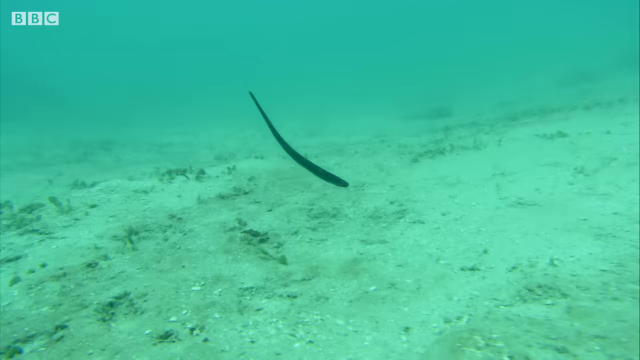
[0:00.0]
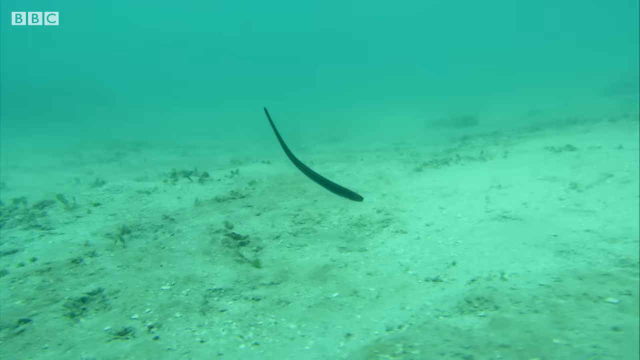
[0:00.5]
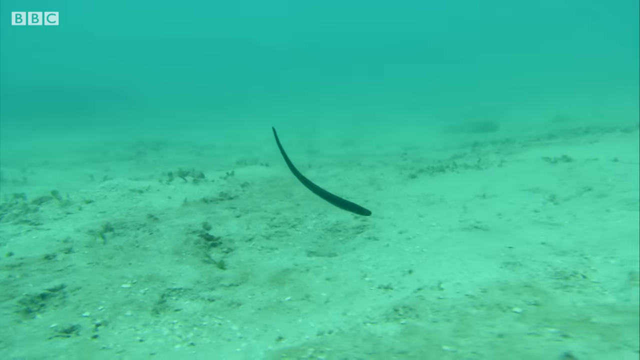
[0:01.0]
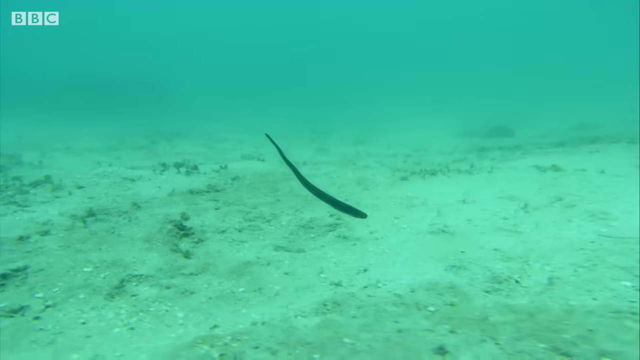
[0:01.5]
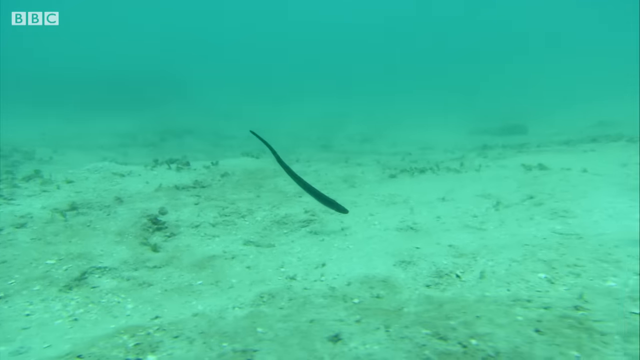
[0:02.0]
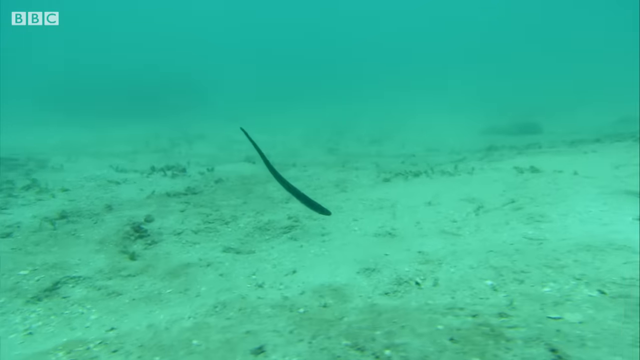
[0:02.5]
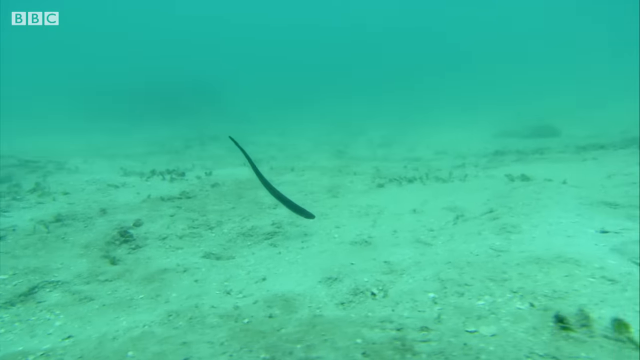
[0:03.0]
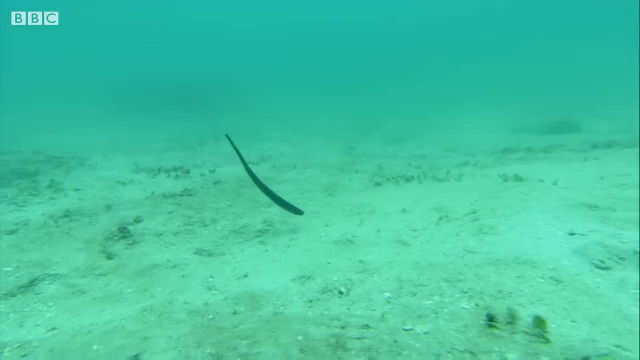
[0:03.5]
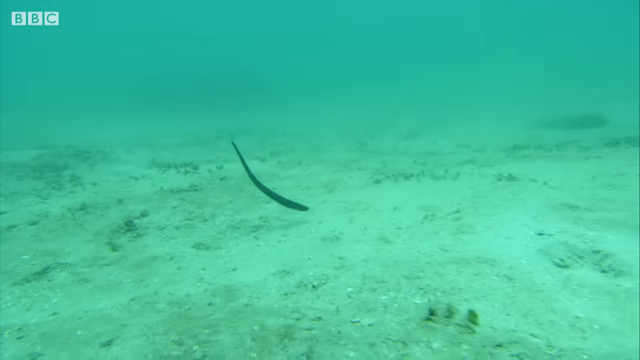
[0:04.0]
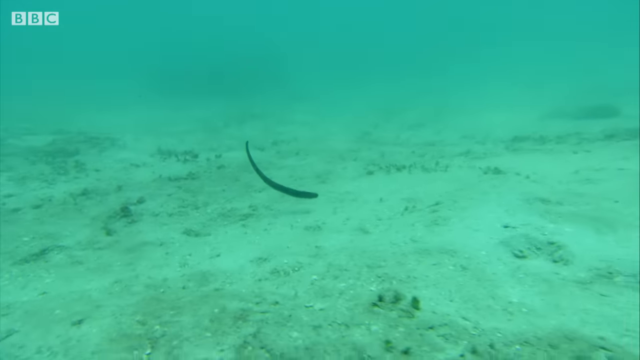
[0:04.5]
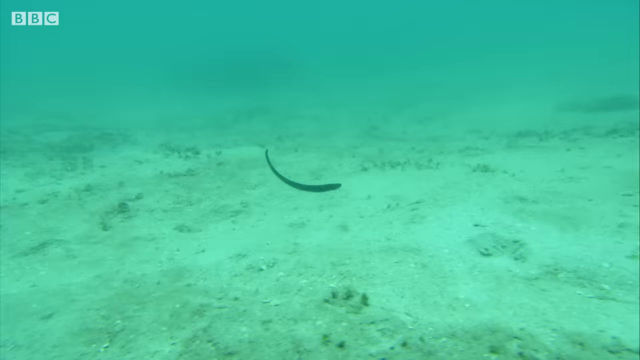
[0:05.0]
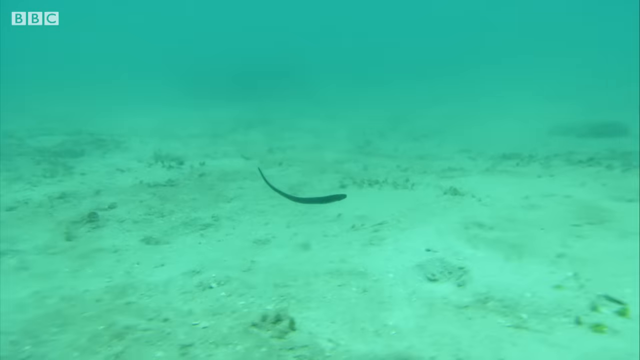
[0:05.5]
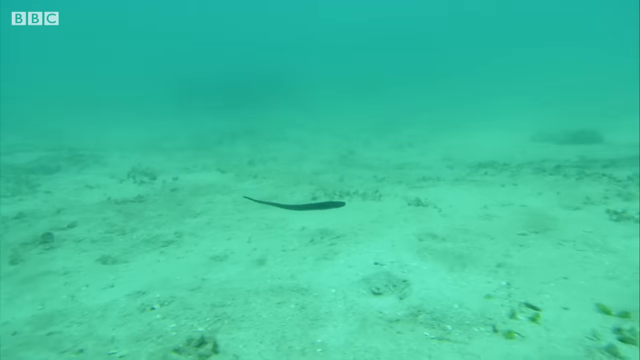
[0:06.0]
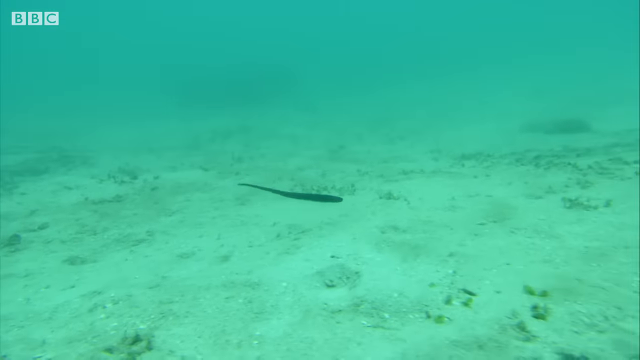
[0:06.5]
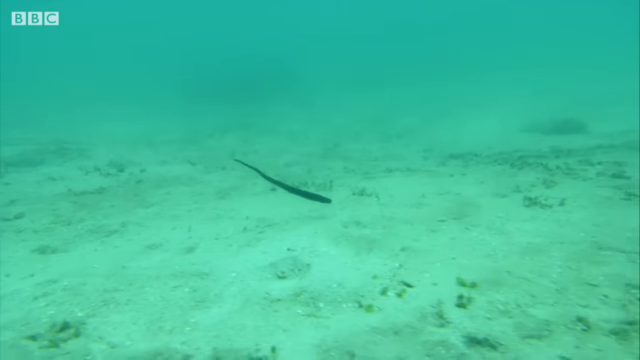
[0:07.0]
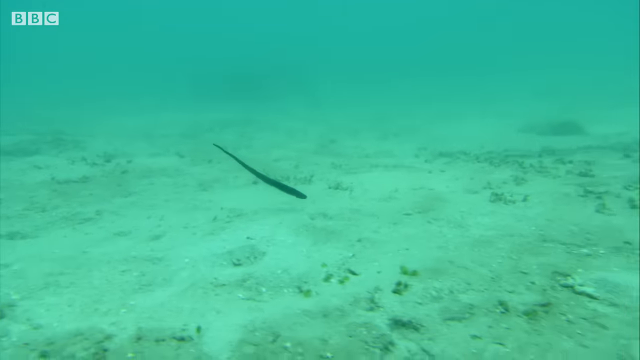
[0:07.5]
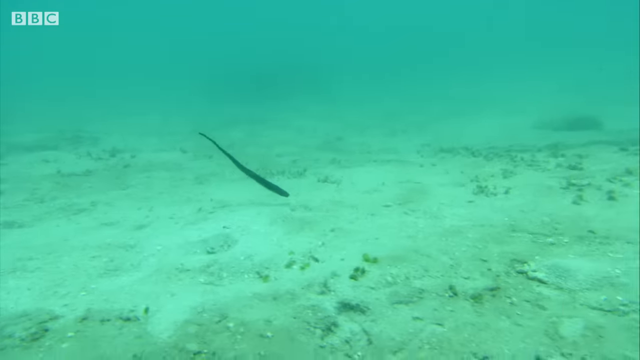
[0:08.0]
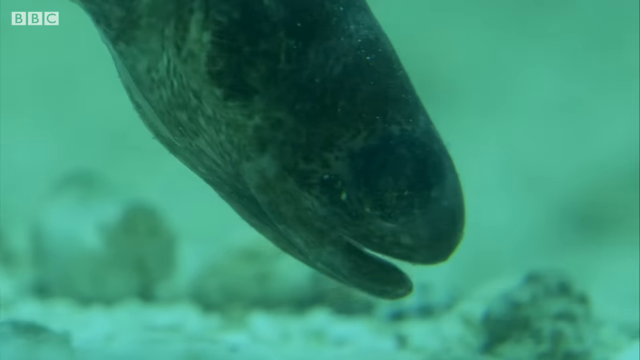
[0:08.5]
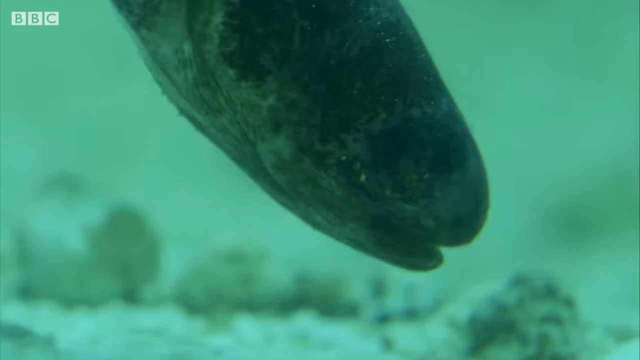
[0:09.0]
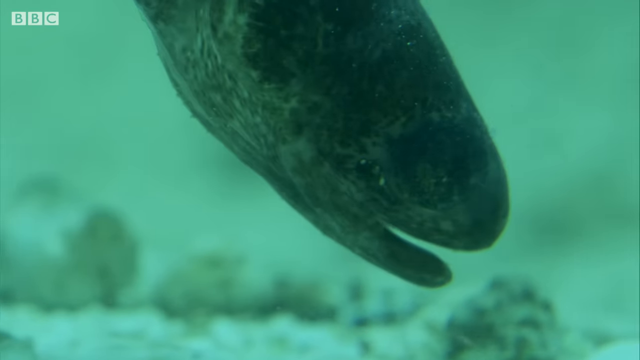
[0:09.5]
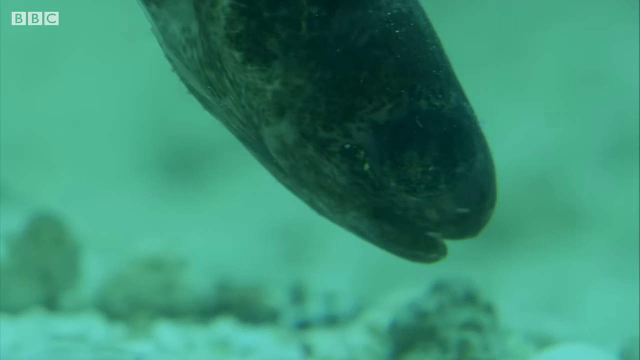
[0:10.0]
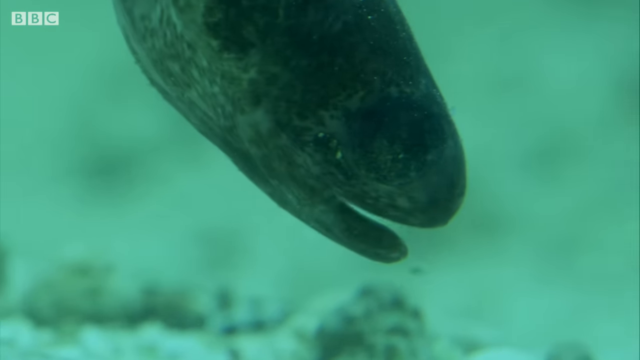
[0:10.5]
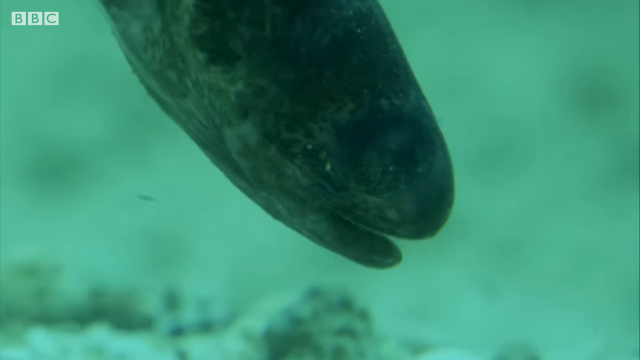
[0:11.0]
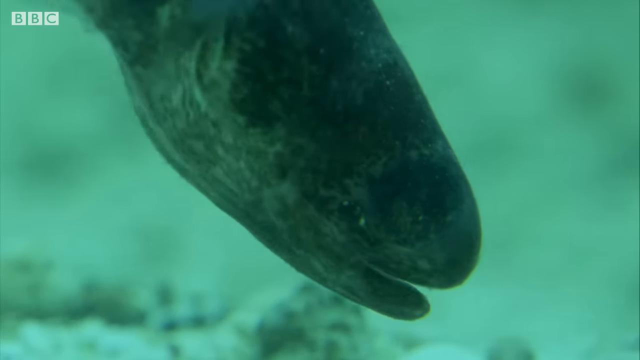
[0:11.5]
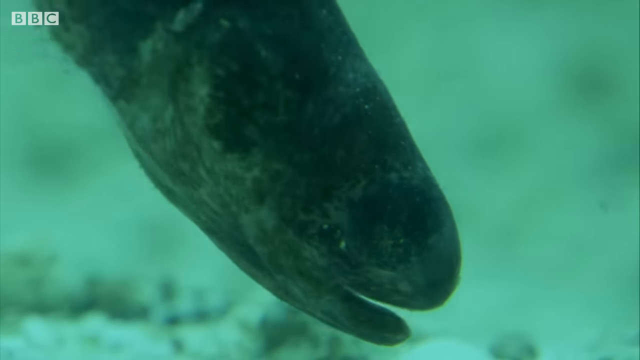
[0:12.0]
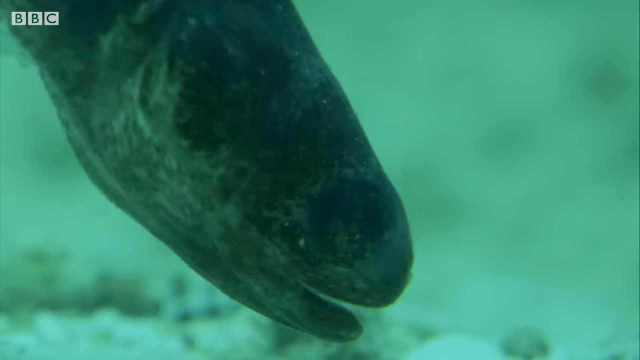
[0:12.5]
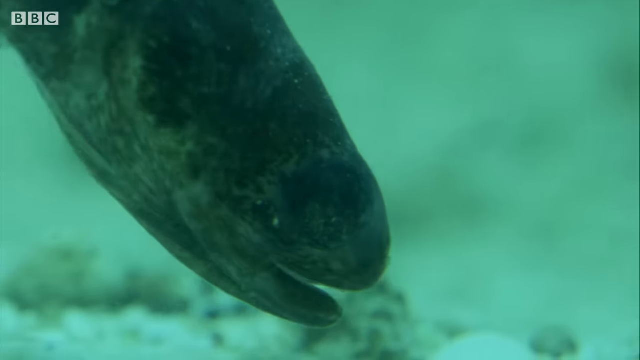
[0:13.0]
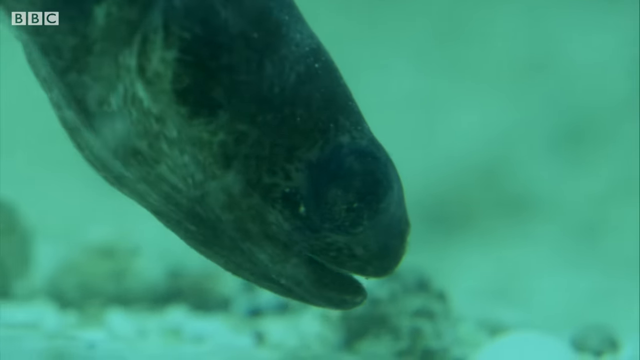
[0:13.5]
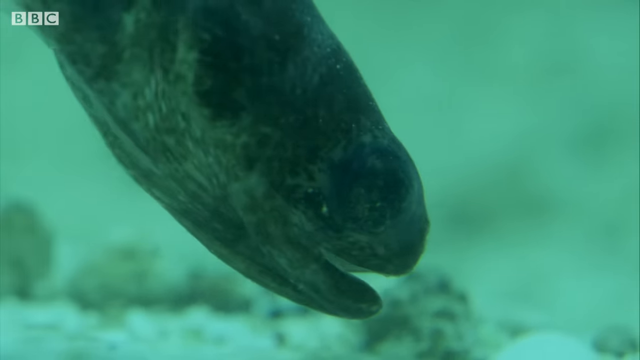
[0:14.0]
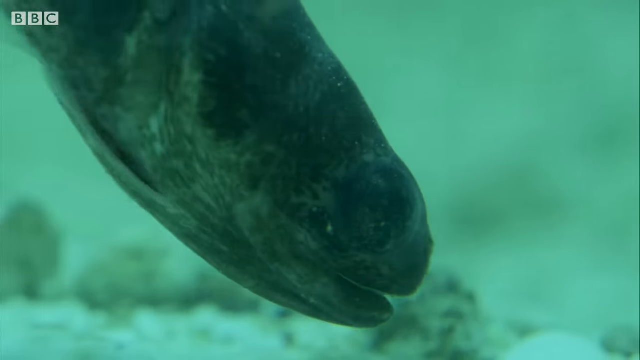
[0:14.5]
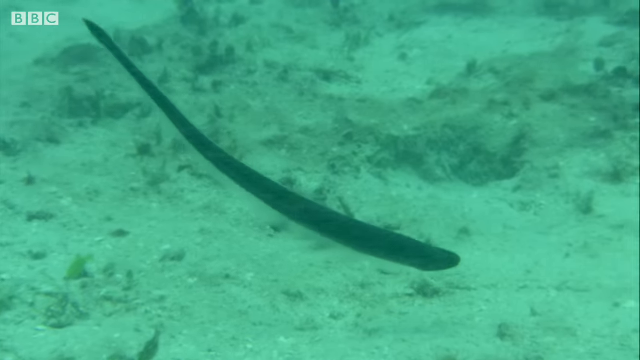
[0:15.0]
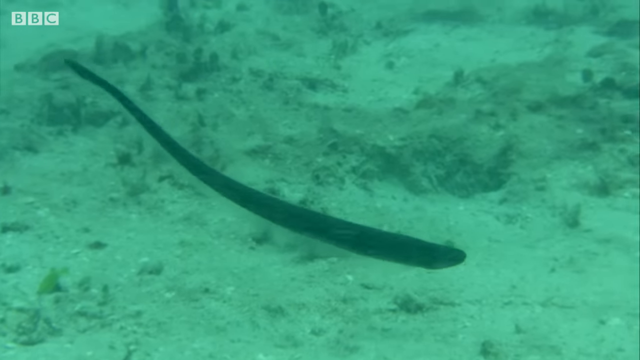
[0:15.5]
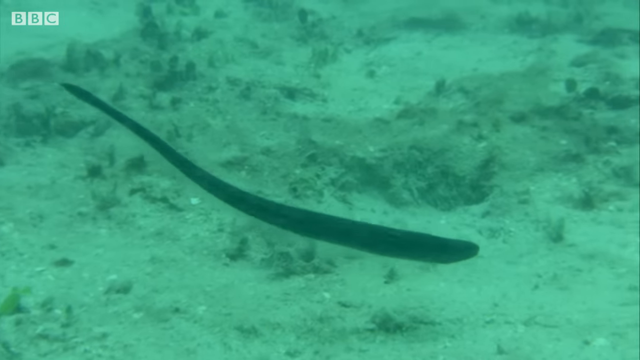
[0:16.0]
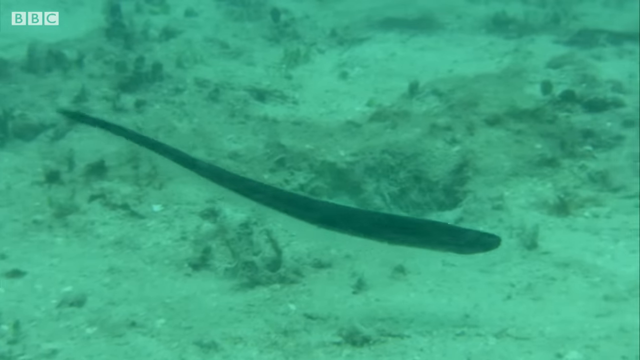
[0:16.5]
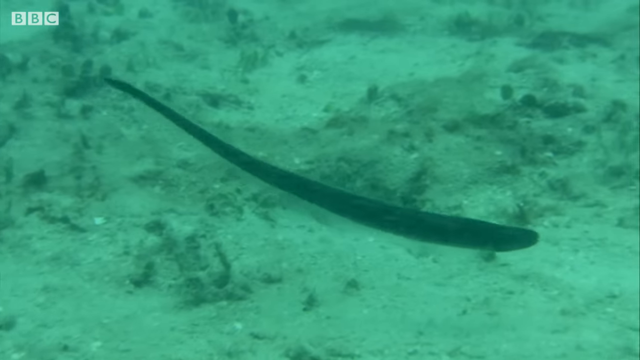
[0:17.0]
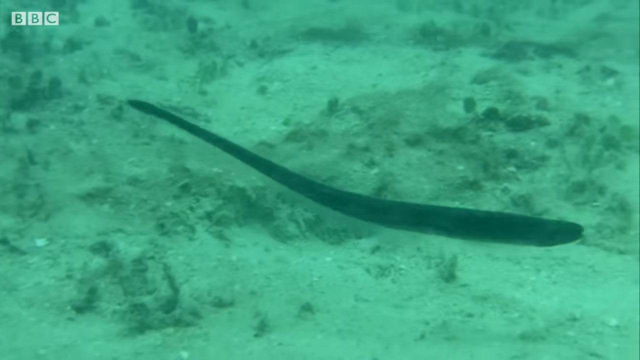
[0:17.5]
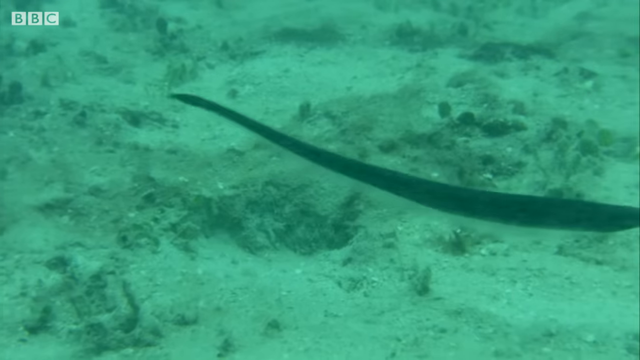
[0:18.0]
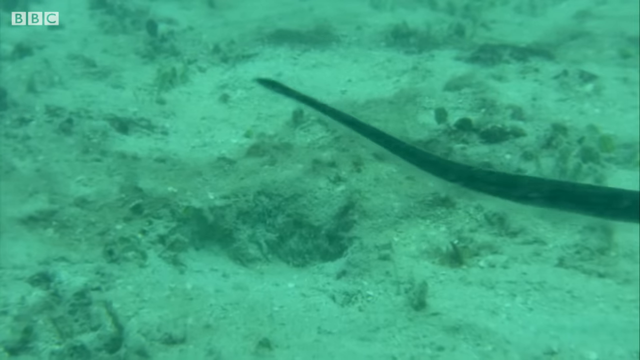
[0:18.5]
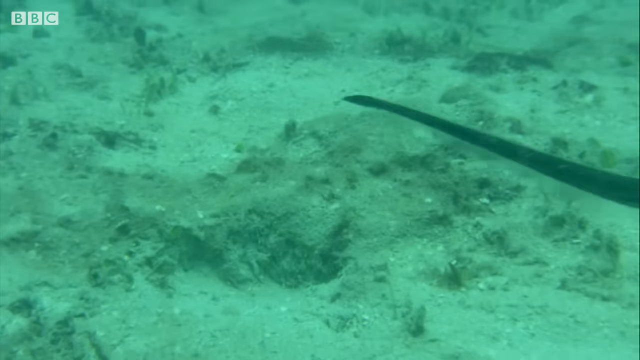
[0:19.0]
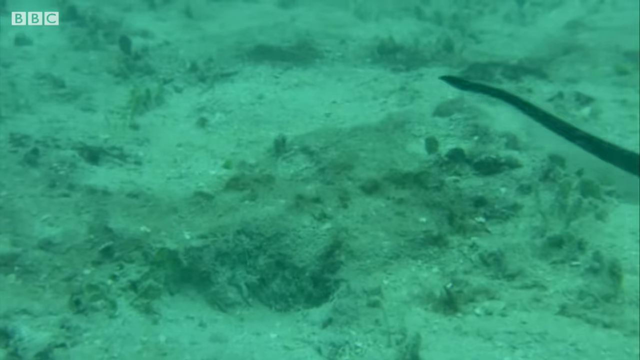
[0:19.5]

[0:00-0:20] An animal swims in the water; it seems to be a pear fish, as text in the corner reads "pear fish." It looks like an eel, or perhaps a tapeworm. Its mouth opens and closes continuously. It appears to be swimming along the bottom of the water, which is a little murky, and it seems to be trying to eat things floating around off the bottom, opening and closing its mouth whenever it encounters them. The bottom looks somewhat sandy, with little plant life. Apart from the eel, nothing else is visible in the picture.